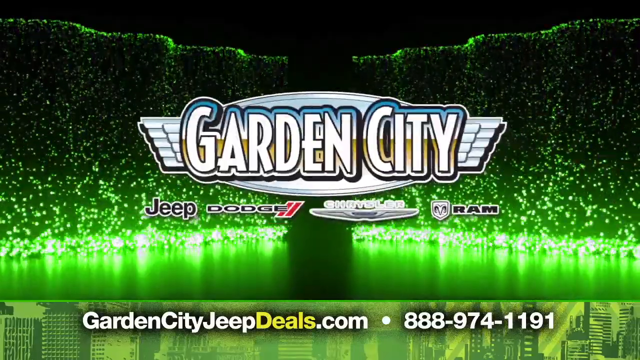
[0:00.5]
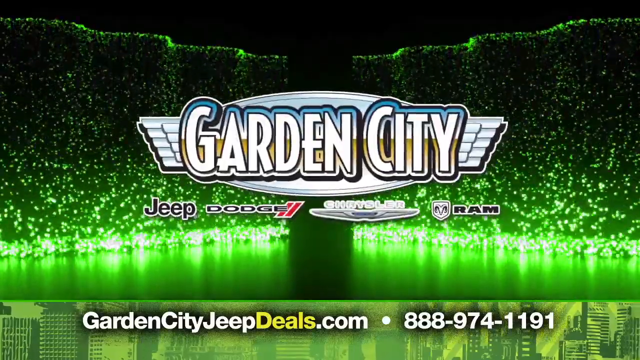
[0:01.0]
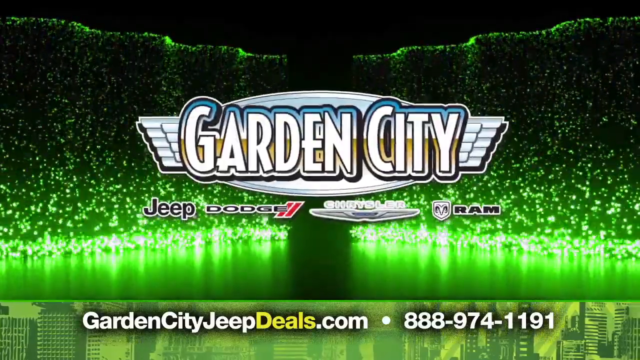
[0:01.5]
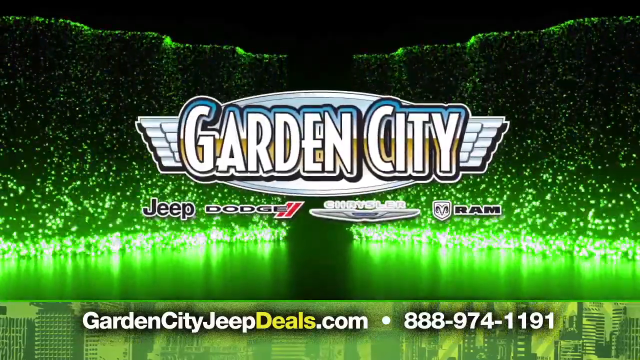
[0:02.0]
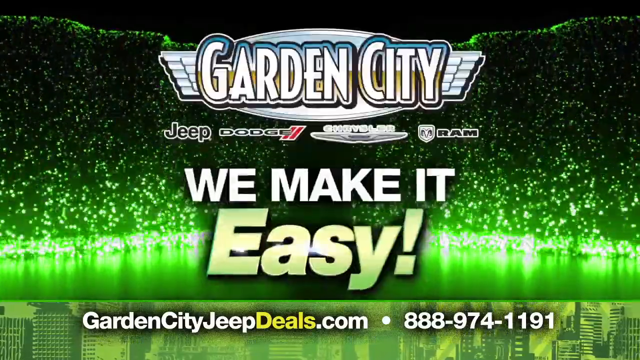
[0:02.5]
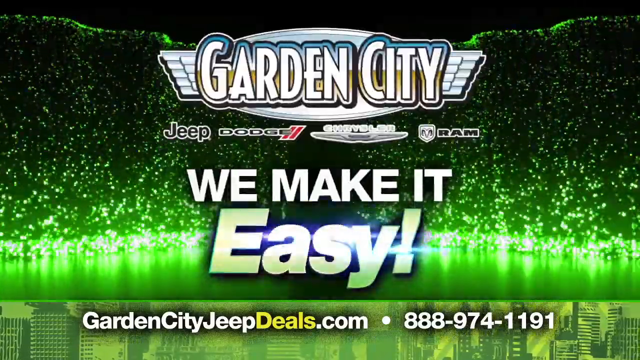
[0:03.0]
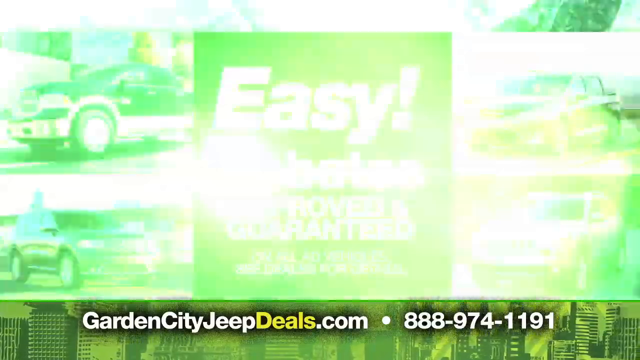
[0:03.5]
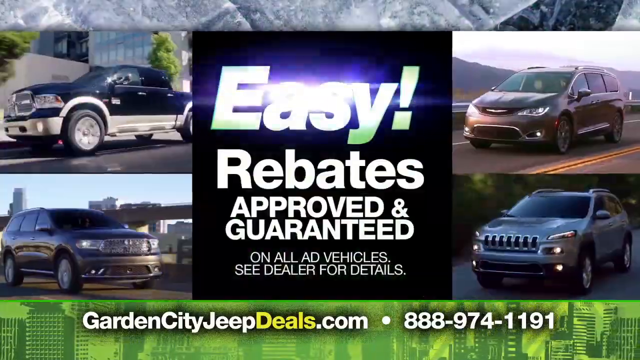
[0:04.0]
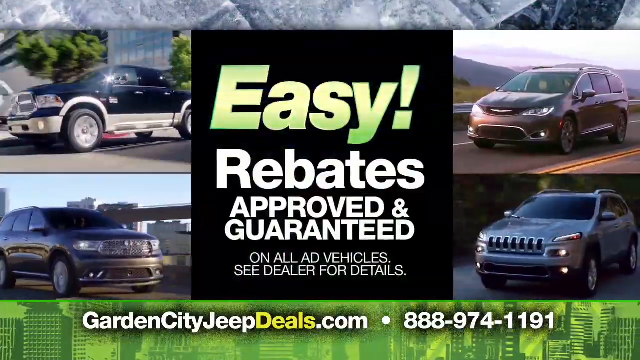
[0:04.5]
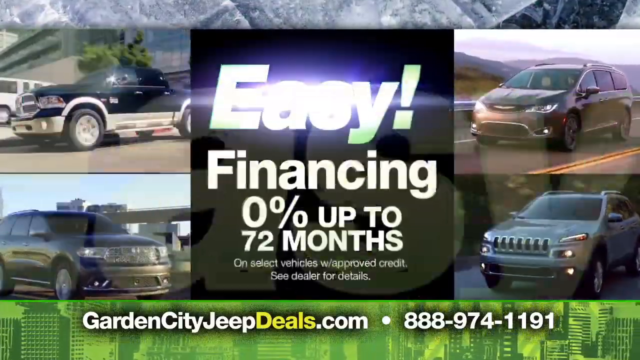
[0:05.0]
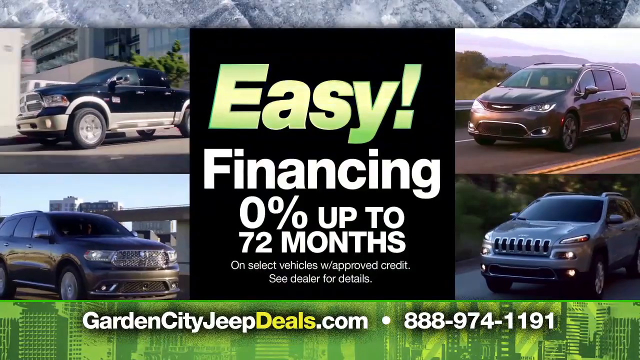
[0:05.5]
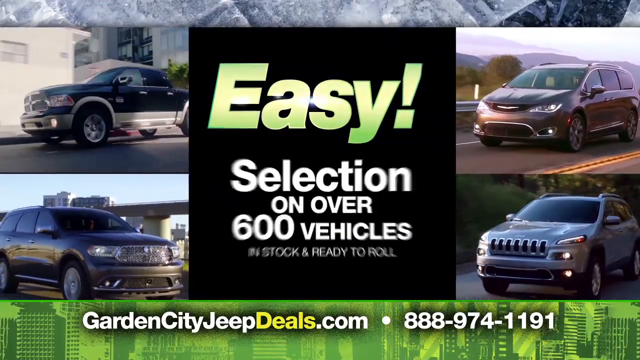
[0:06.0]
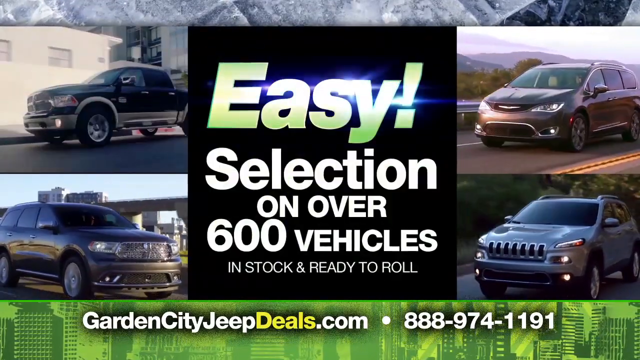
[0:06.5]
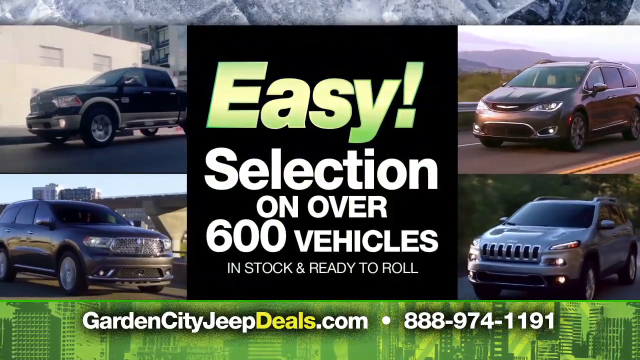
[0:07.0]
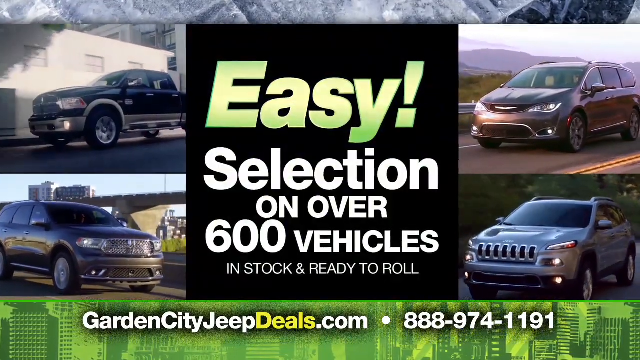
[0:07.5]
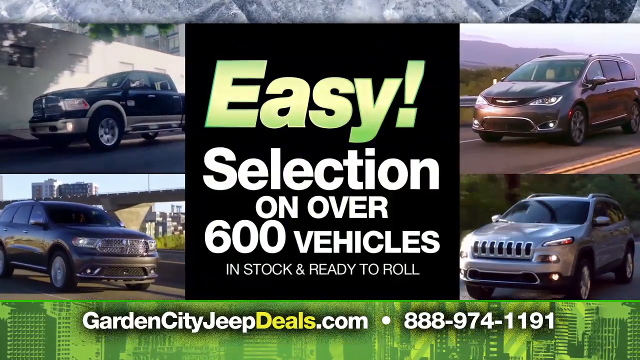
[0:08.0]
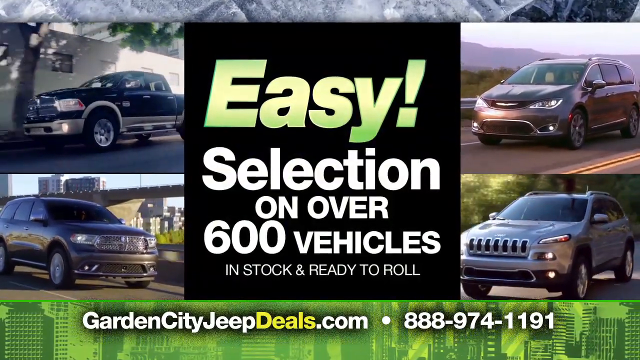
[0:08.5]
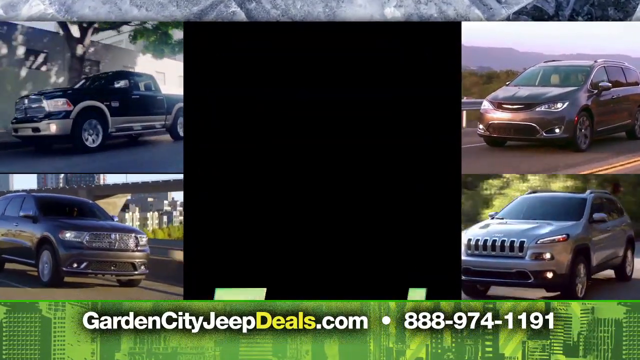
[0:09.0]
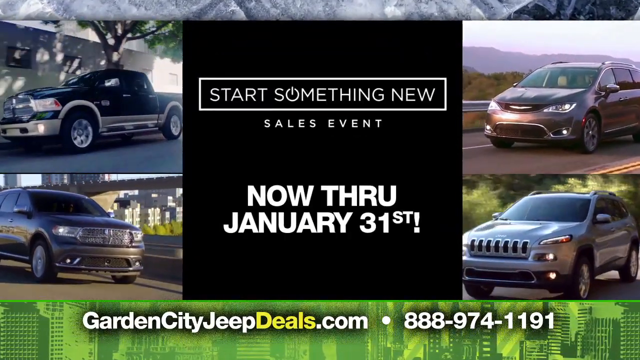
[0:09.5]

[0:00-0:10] Something that looks like green water comes down on the left and right sides of the screen, appearing to fall into a green pond. In the center, the words "Garden City" are surrounded by an emblem that looks like little wings. Below that are "Jeep," "Dodge," another name, and "Ram." At the bottom of the screen is "GardenCityJeepDeals.com," with "888-974-1191" to its right. The words "we make it easy" pop up below "Garden City" and the brand names. The video then moves to a screen showing four different cars, two on the left and two on the right, driving down the street. In the center is a black square reading "easy," and below it, "rebates approved and guaranteed on all ad vehicles. See dealer for details." The website is again at the bottom, with the same phone number to its right. The words below "easy" change to "selection on over 600 vehicles in stock and ready to roll." The words on the black square then change to "start something new, sales event," with "now through January 31st" below.